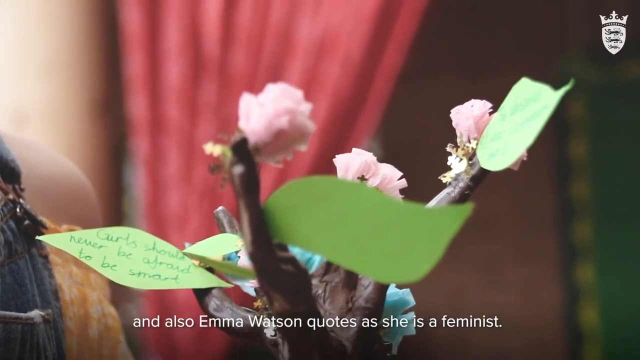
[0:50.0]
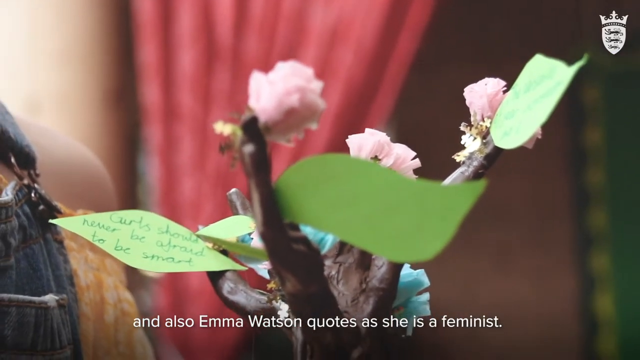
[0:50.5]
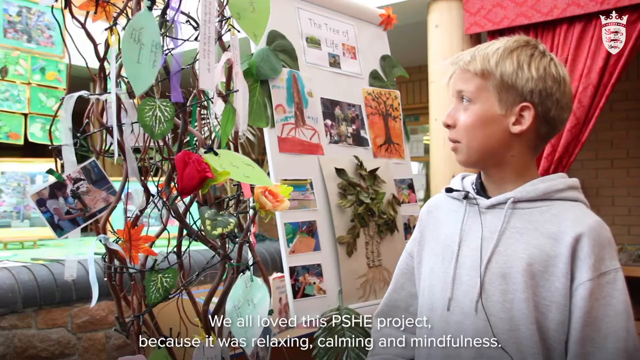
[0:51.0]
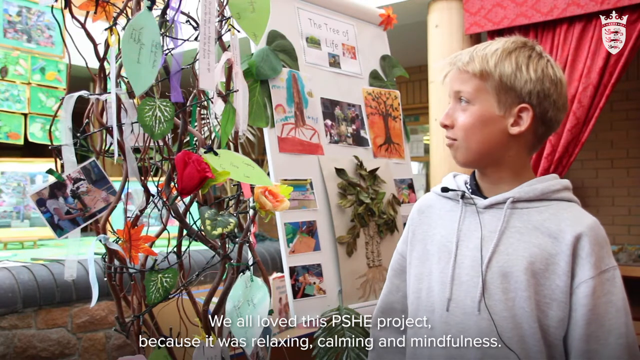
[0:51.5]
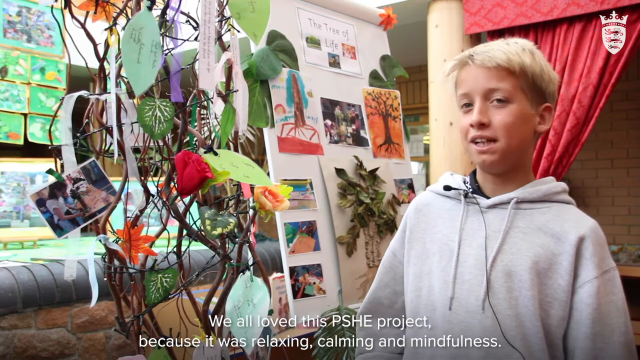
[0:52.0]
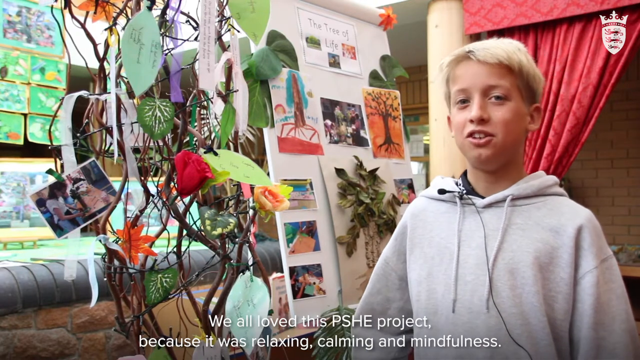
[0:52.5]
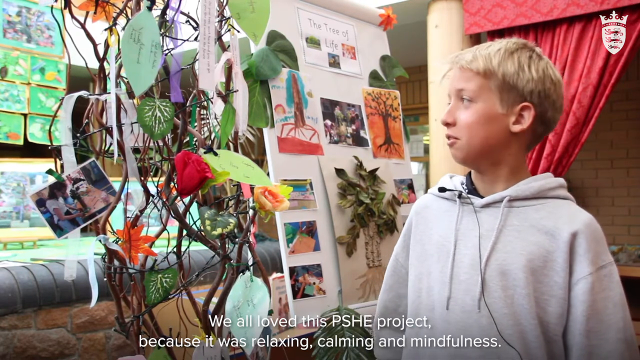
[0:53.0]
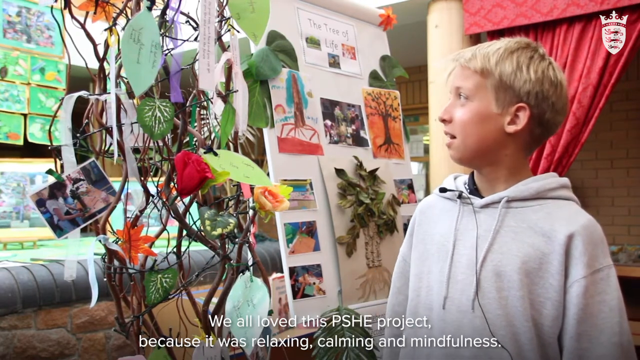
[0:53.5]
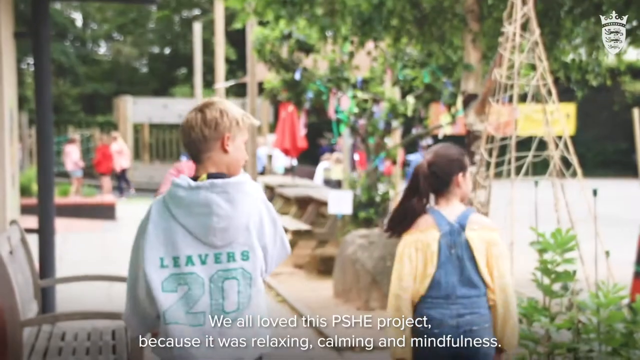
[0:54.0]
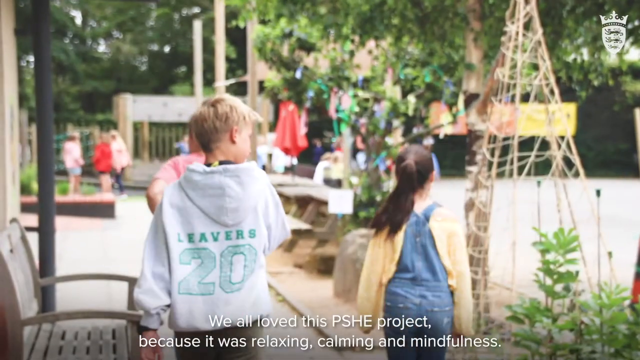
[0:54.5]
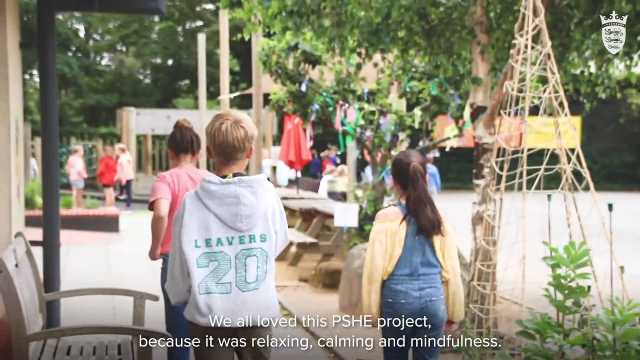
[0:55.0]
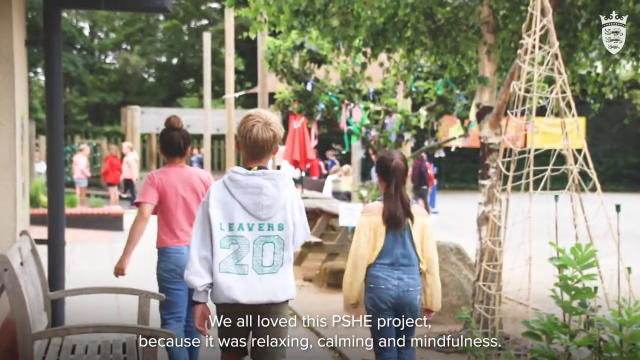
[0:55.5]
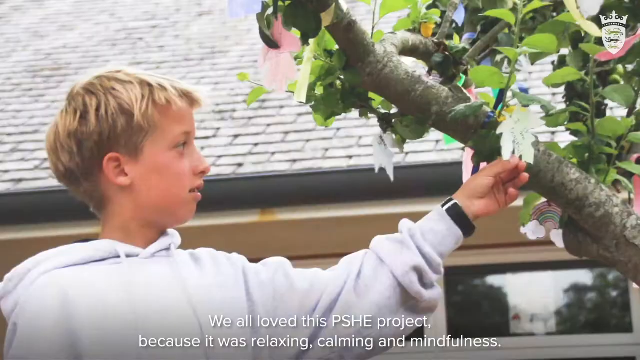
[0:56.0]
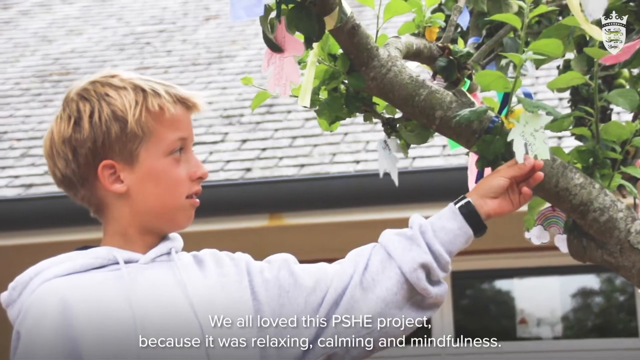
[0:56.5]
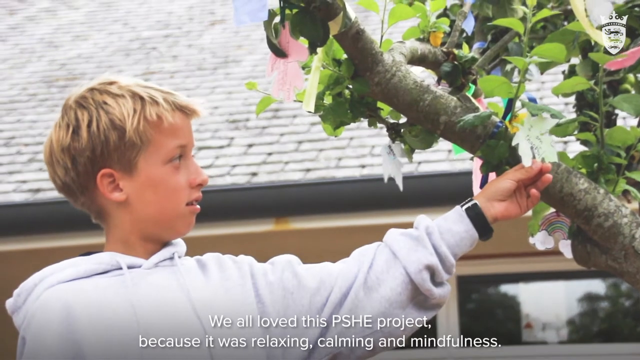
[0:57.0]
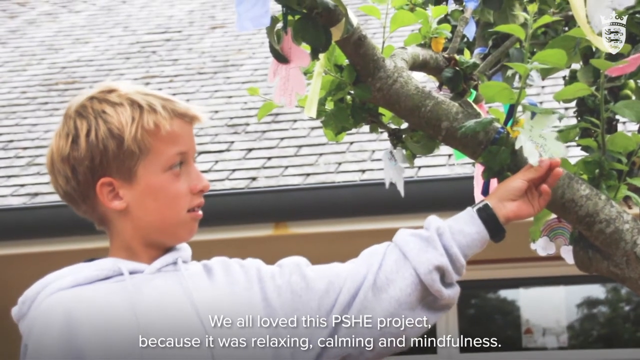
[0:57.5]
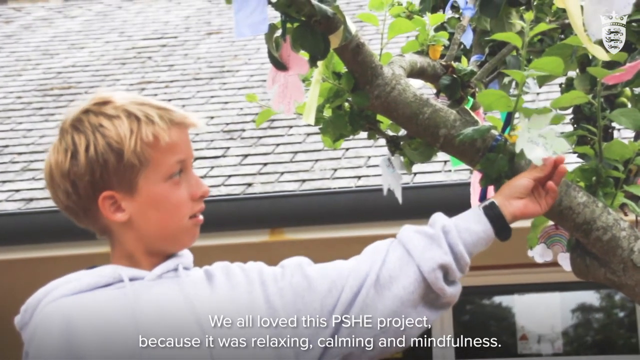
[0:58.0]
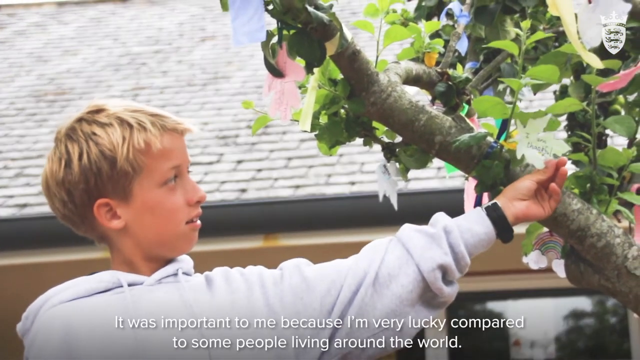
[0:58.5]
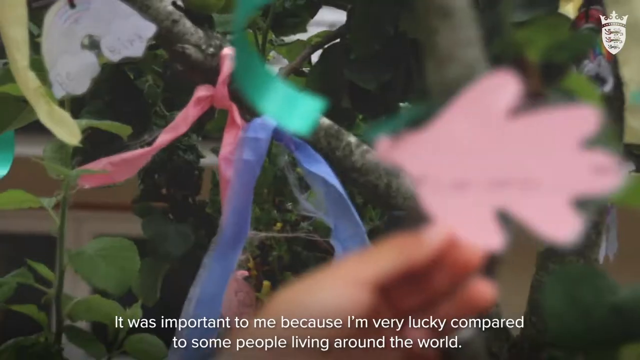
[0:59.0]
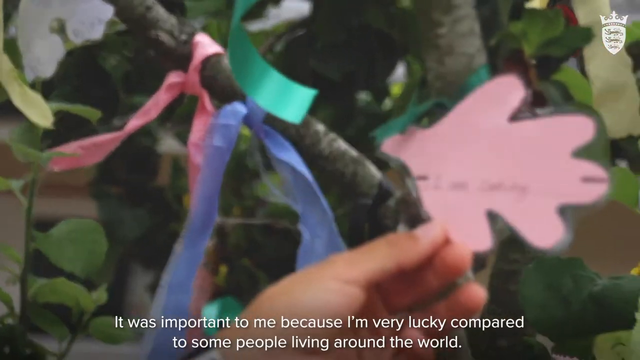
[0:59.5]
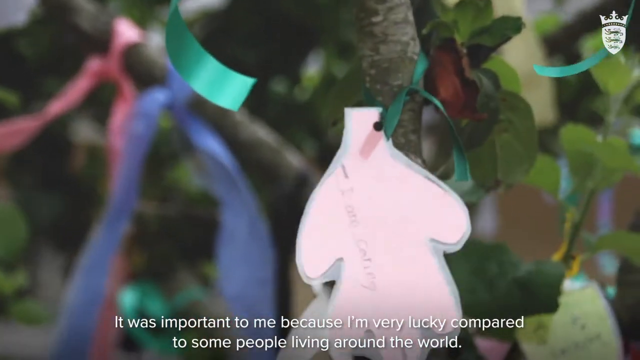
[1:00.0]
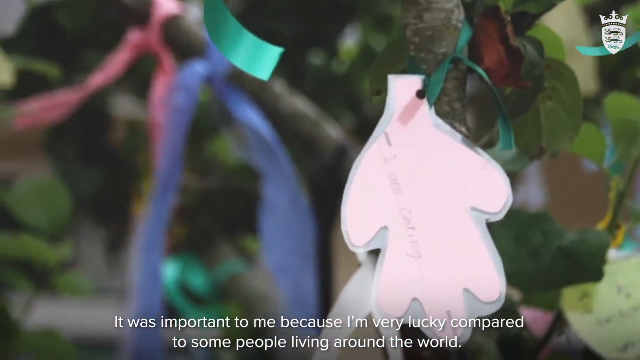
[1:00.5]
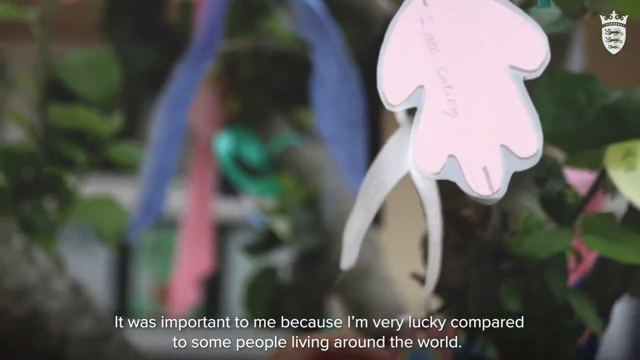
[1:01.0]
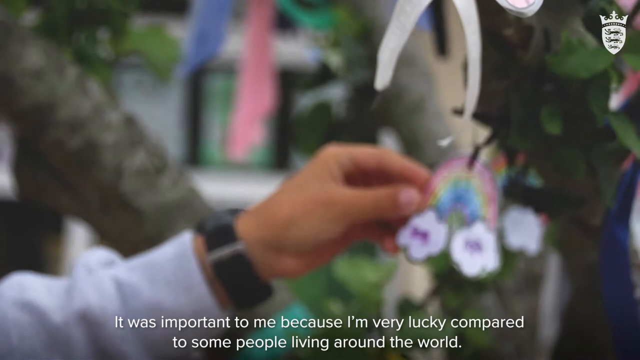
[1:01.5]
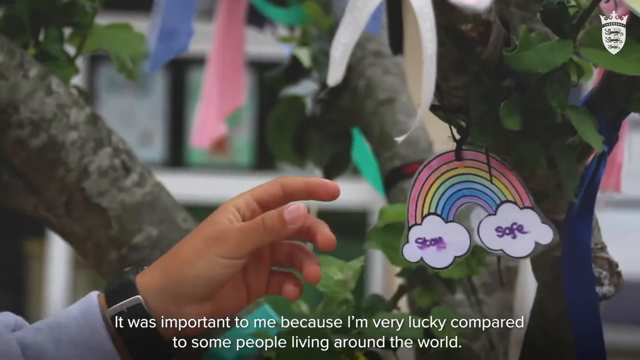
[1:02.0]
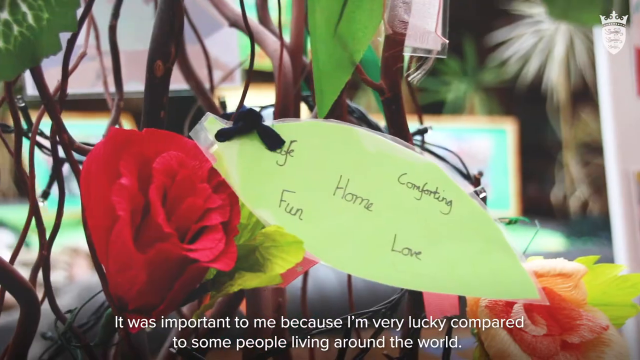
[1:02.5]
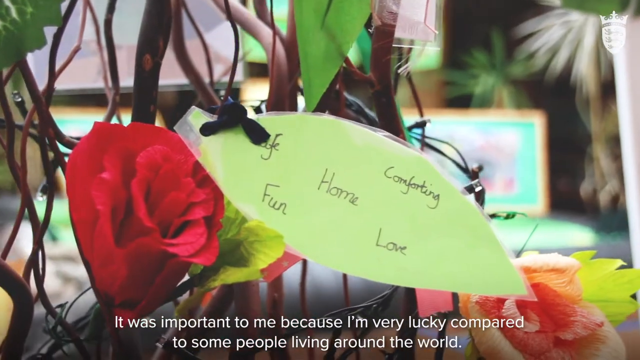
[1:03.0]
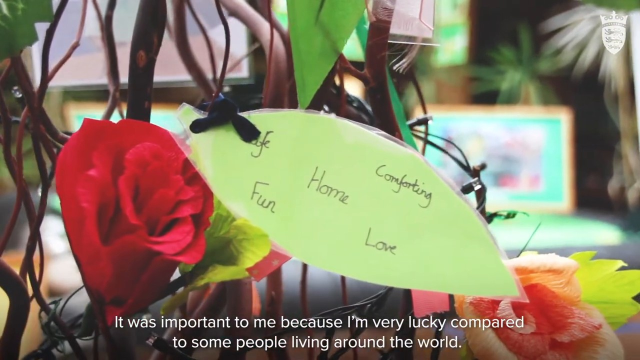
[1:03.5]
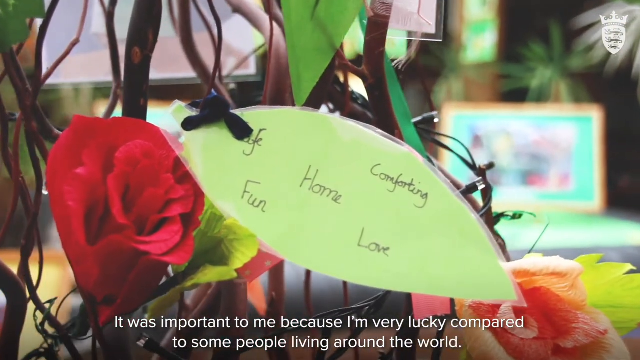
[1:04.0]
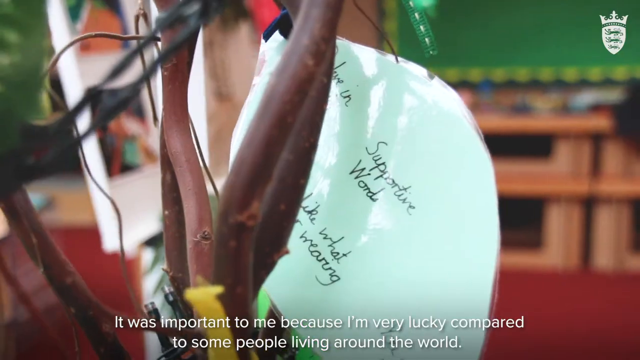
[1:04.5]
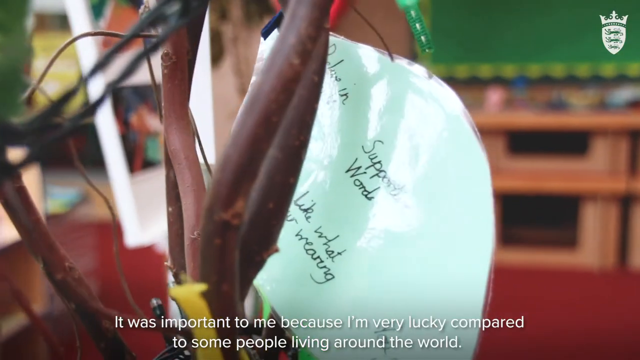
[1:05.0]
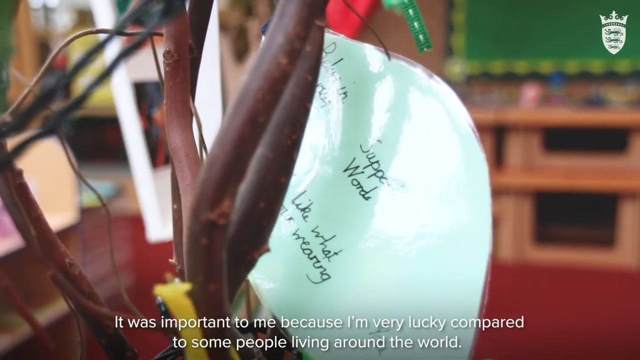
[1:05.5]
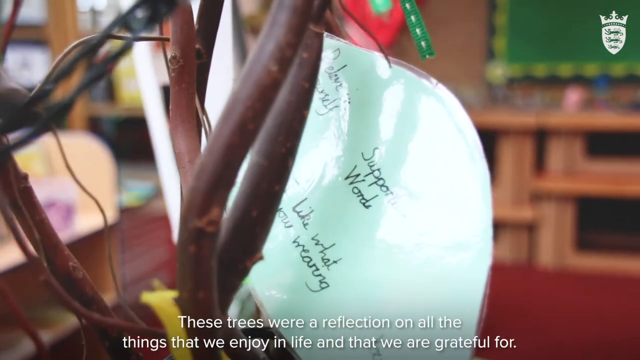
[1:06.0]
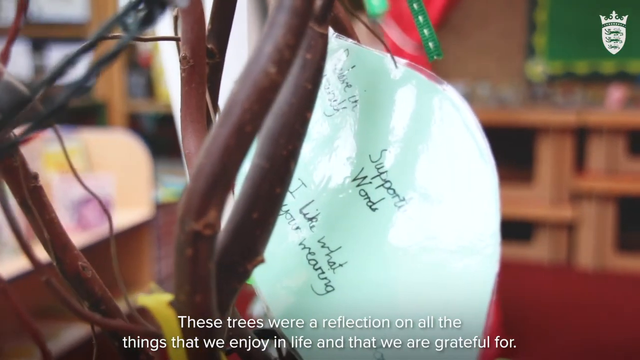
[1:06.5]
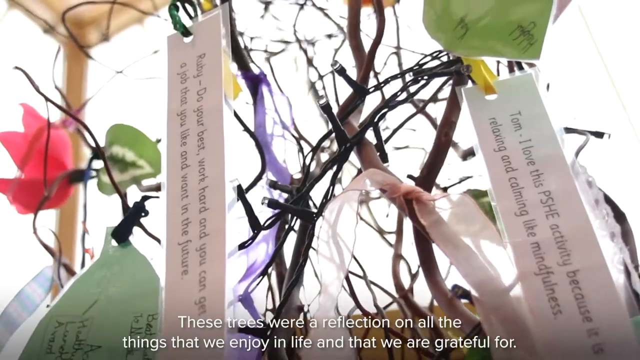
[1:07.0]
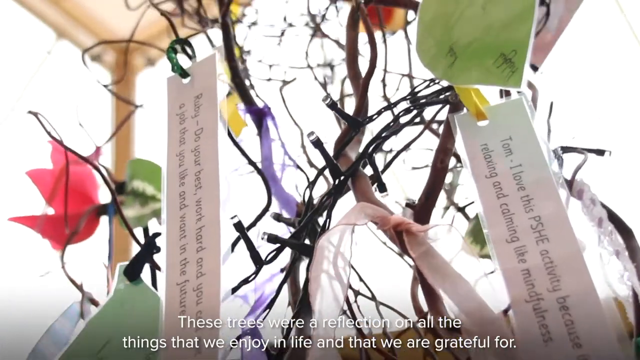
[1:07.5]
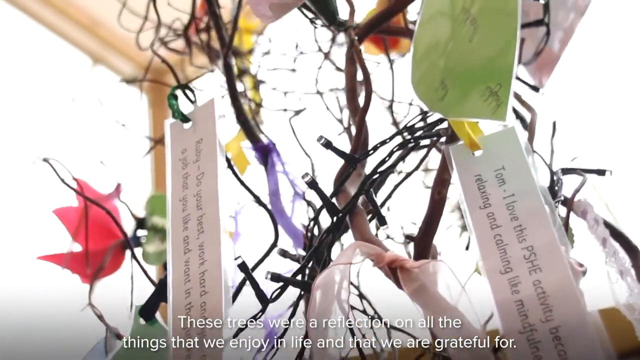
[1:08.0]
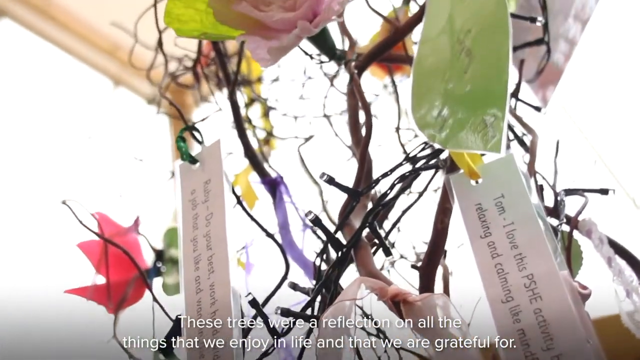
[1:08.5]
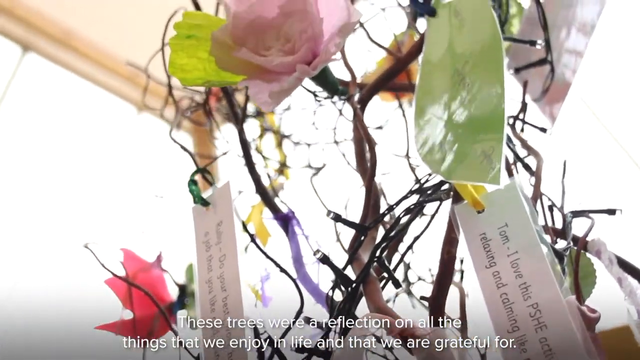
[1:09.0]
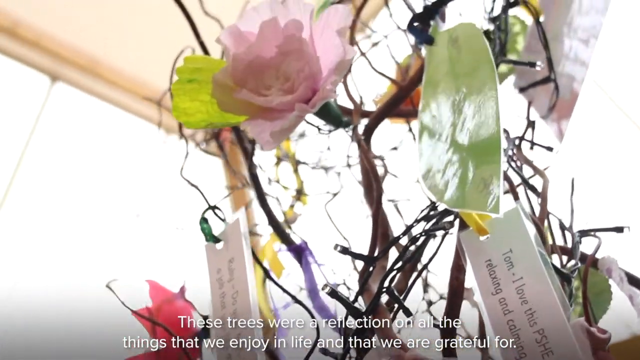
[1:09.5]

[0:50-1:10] The shot zooms in on the quotes about Emma Watson being an inspiration on the flowers. The video cuts to a young boy in a gray hoodie examining real leaves on a tree, then to him examining fake leaves on the art affirmation tree; he appears to be writing about what he is fortunate to have and thankful for. He states that these trees are a reflection of the things we have, enjoy in life and are grateful for. The video then cuts to a little girl. The project seems to be named the P-S-H-E project. In the top right there is what almost looks like a school watermark while the boy is talking; it disappears at a cut to what almost looks like stock footage, then the video cuts back to a little girl and the watermark is in the top right again. Its design has a crown, suggesting it is possibly some kind of European university.